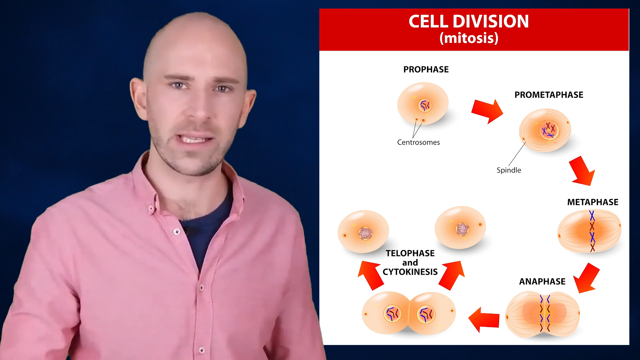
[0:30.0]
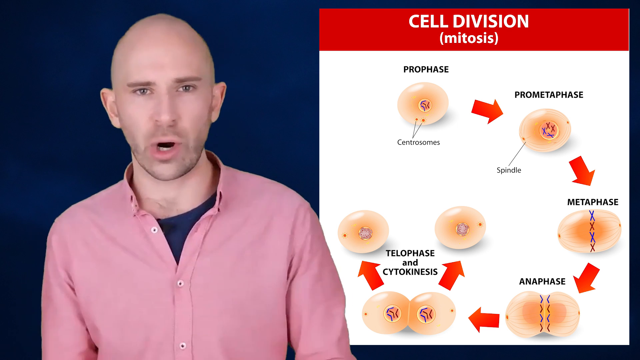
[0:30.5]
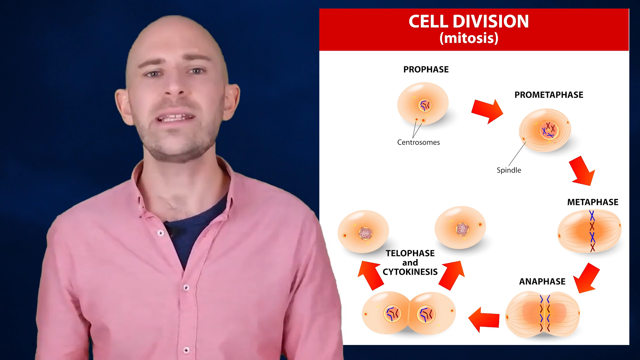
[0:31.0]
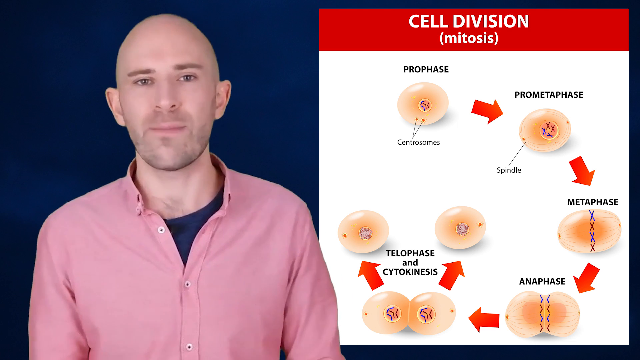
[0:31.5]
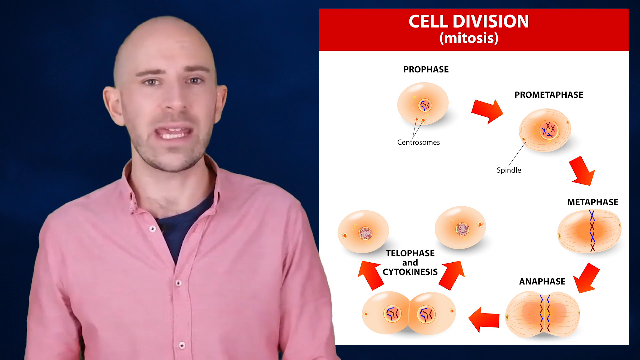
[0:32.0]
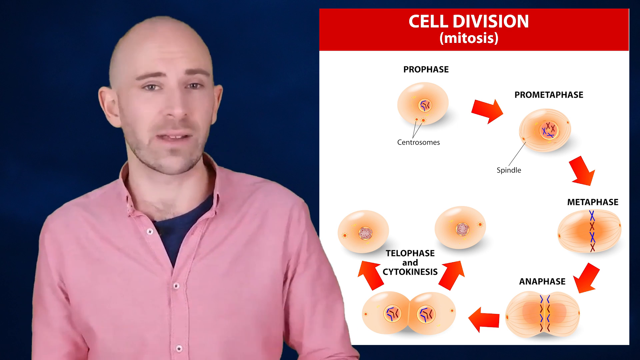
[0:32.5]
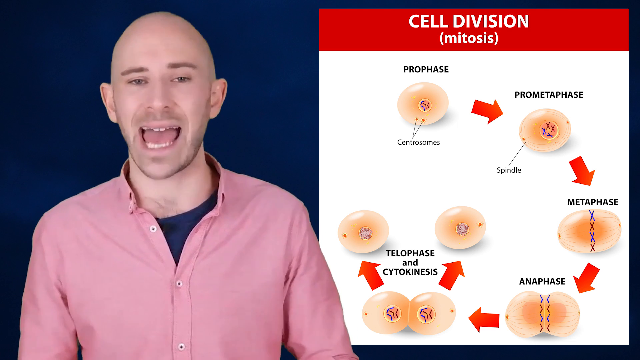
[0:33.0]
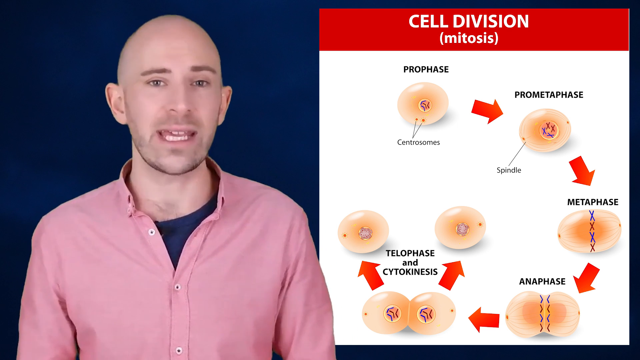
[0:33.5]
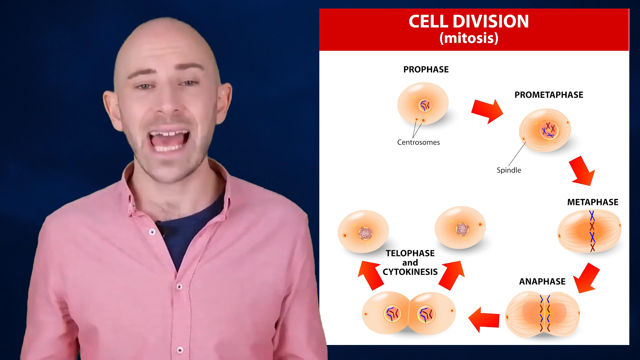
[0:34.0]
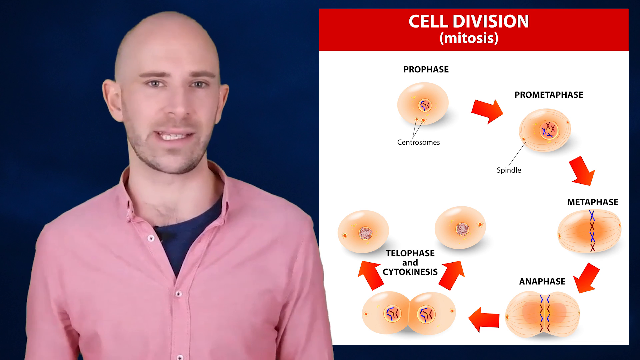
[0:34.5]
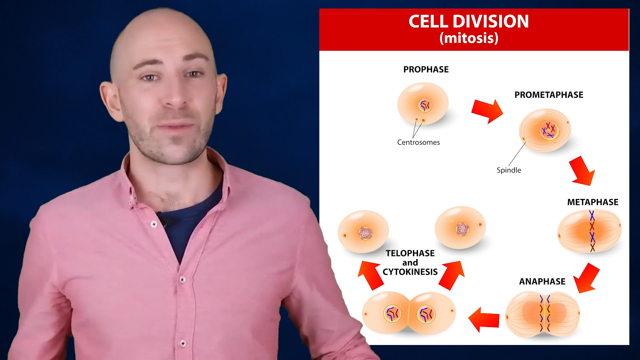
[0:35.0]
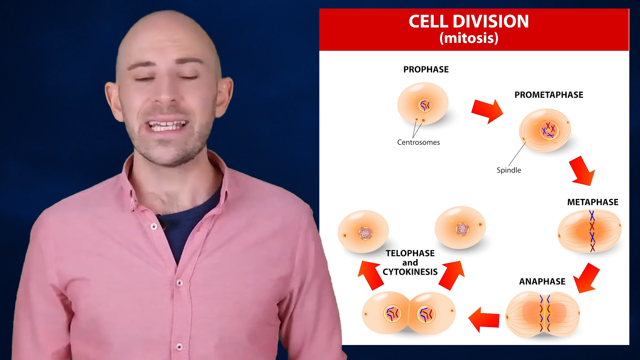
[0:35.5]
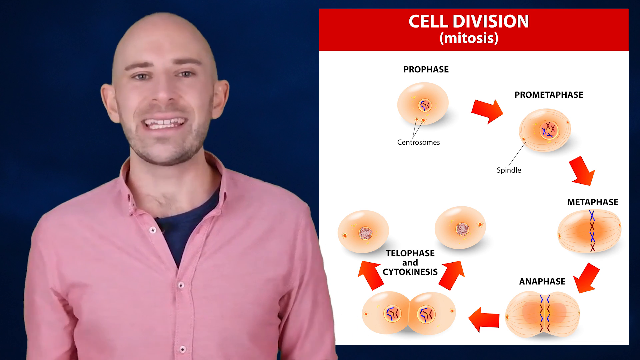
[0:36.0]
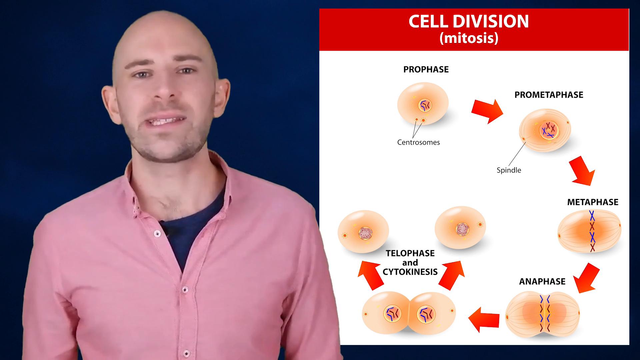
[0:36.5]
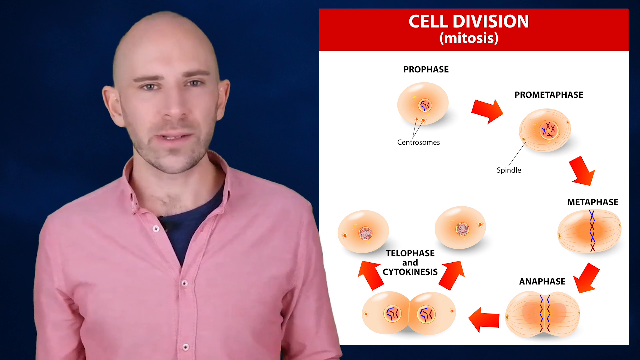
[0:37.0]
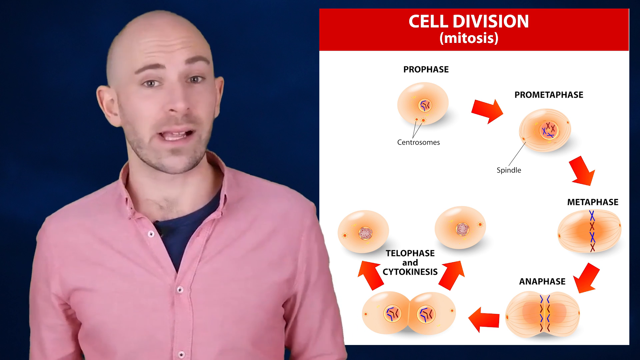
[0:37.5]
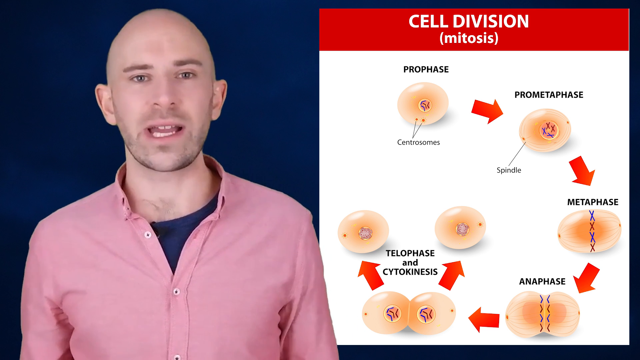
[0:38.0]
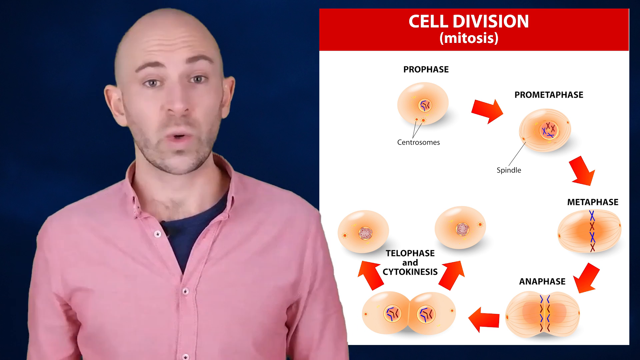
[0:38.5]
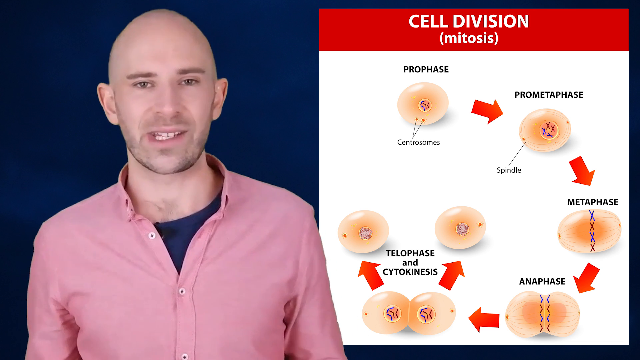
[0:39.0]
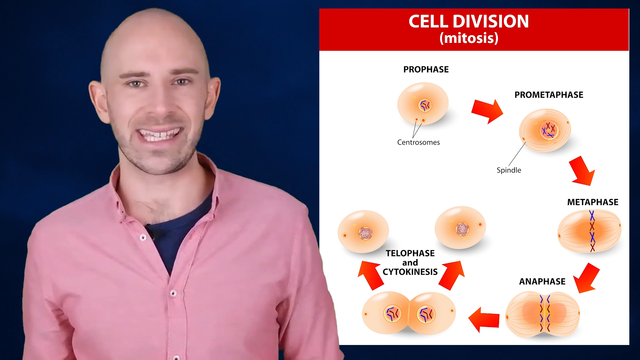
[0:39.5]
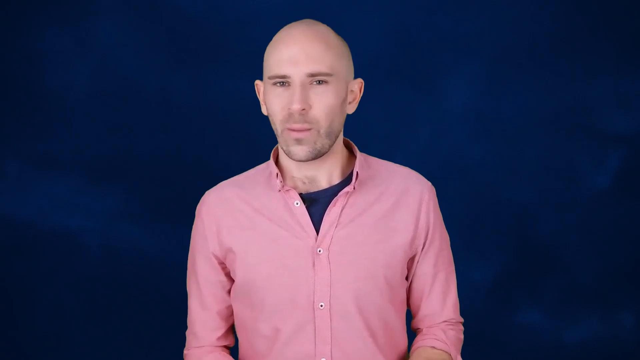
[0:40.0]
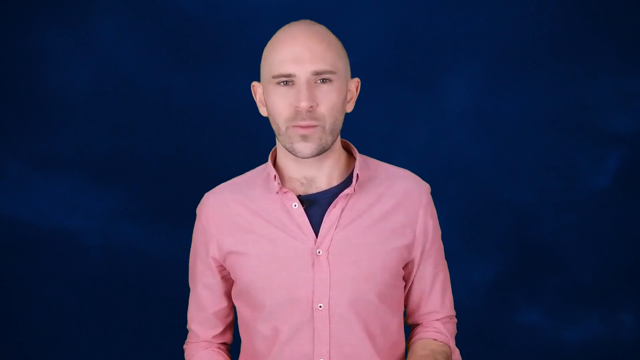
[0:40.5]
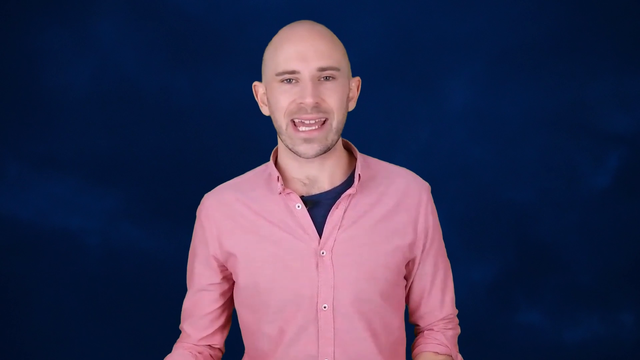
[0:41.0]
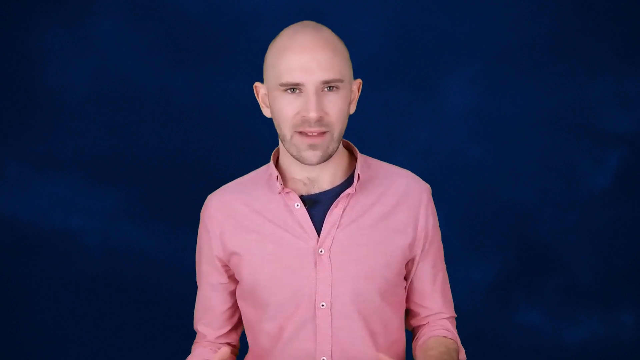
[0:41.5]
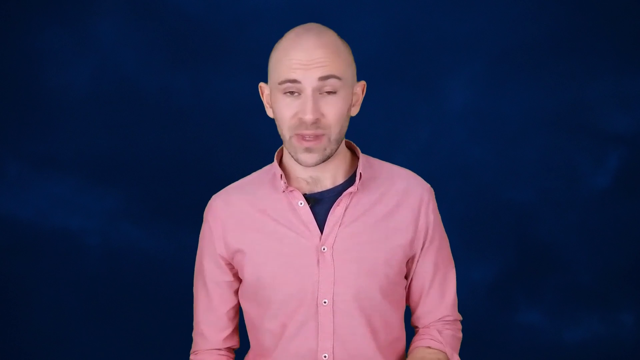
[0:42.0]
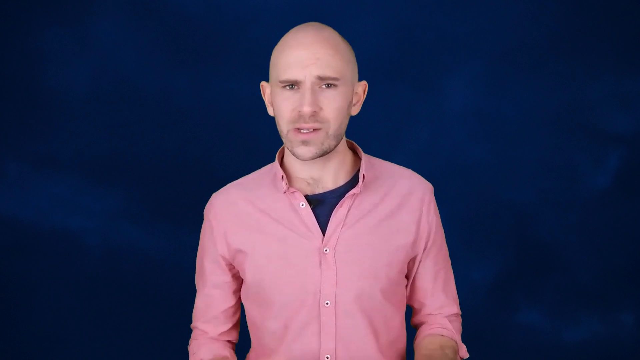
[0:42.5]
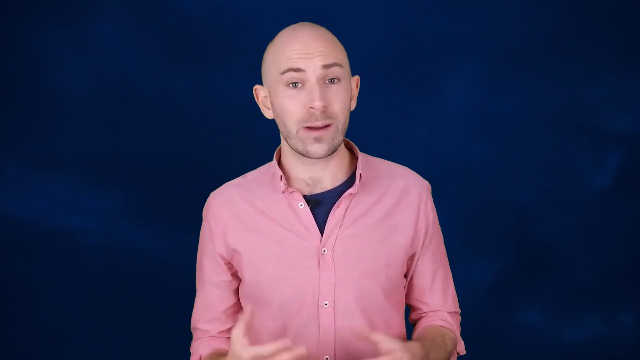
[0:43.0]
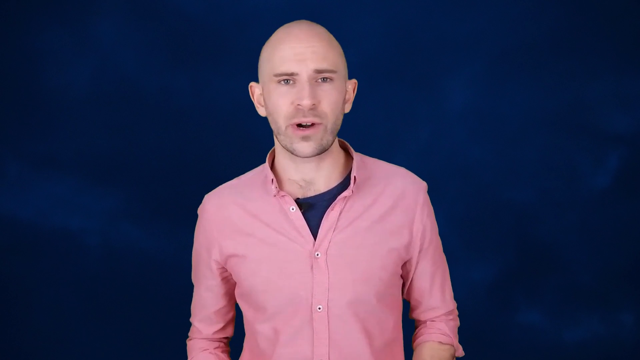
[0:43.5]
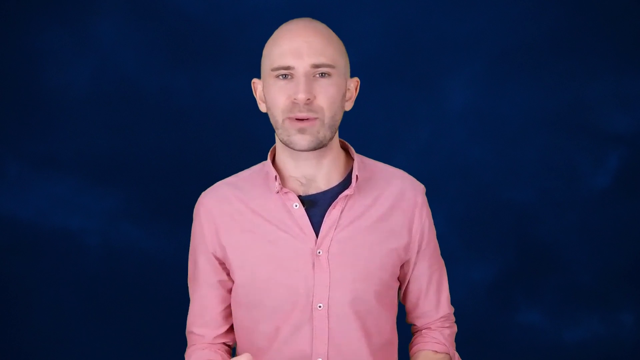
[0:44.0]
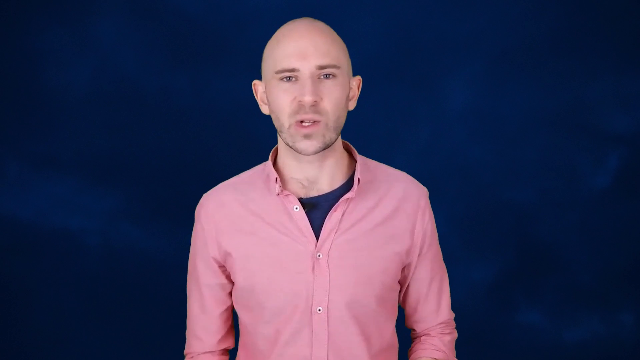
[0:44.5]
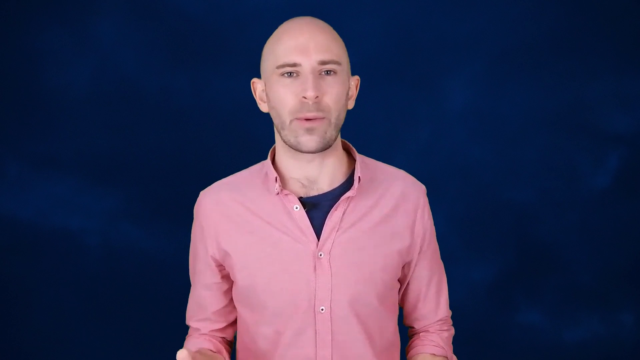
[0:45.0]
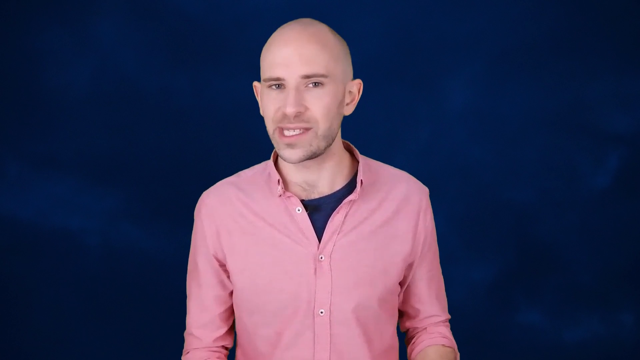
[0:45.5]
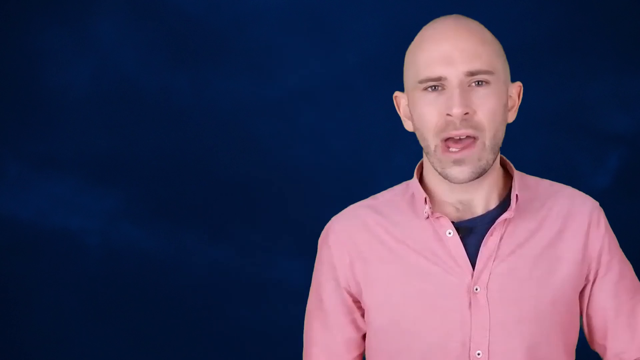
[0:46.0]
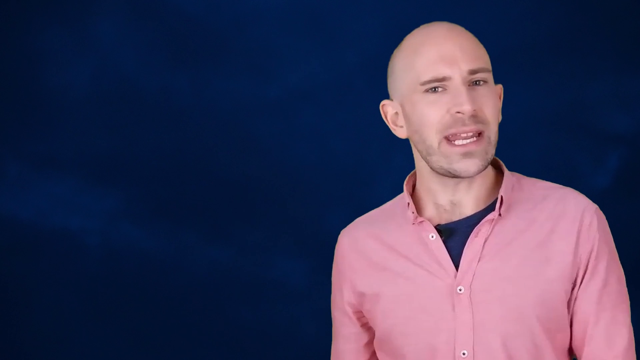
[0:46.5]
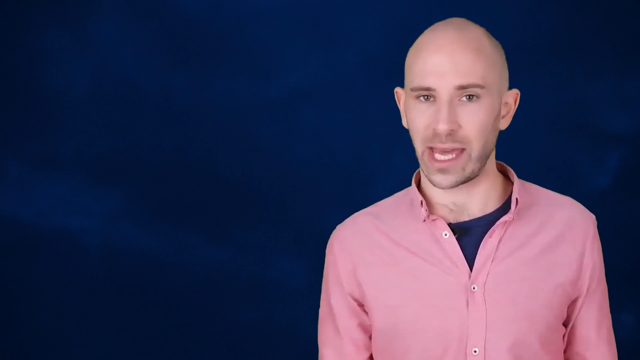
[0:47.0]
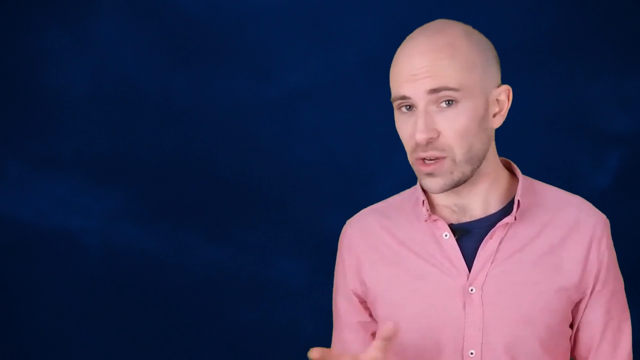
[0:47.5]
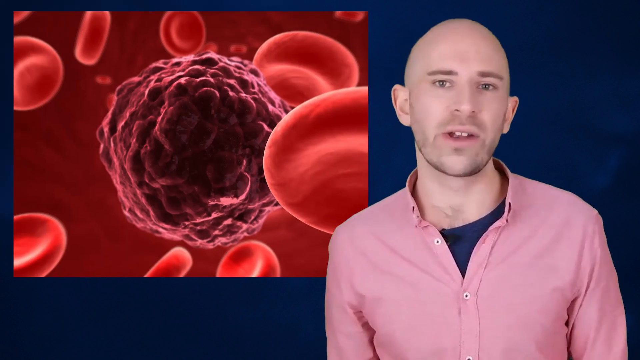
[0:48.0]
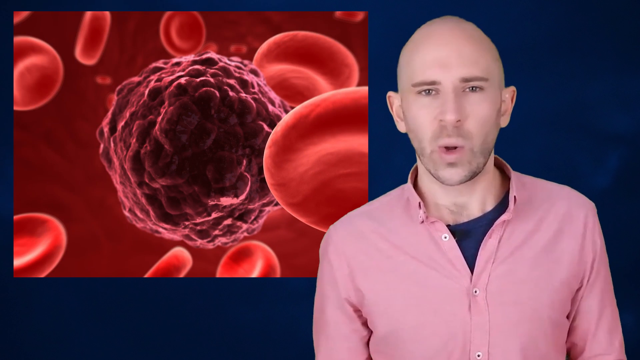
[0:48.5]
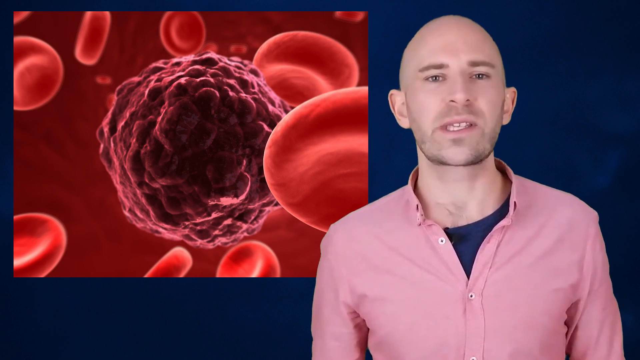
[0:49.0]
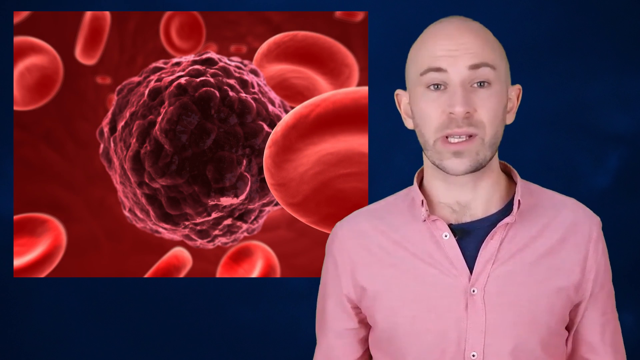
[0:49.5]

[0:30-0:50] The bald-headed man in a pink shirt with a black t-shirt underneath stands and talks, his mouth moving, in front of a blue background. To the right is an image reading "cell division mitosis" in white on a red background. It shows the various stages of a cell changing: the prophase as the first stage, moving to the prometaphase, then the metaphase, then the anaphase, then the telophase and the syntokinesis phase. In the prophase, central zones can be seen in the middle of the cell. The video then transitions back to the bald-headed man, still wearing the pink shirt. To the left of the screen is now an image of red blood cells with a huge chunk of objects among them.